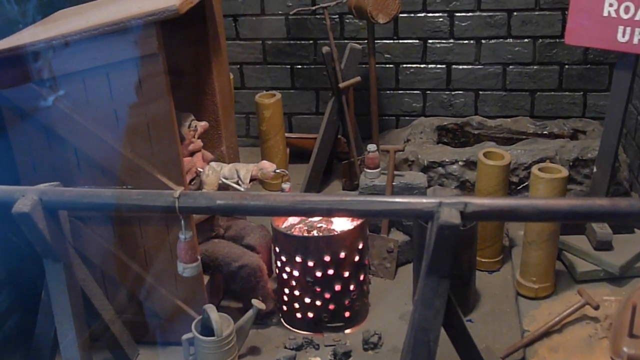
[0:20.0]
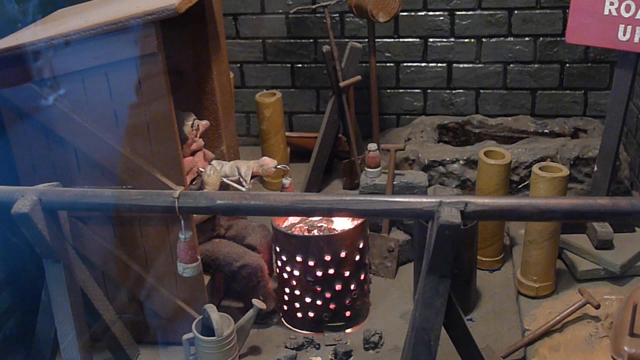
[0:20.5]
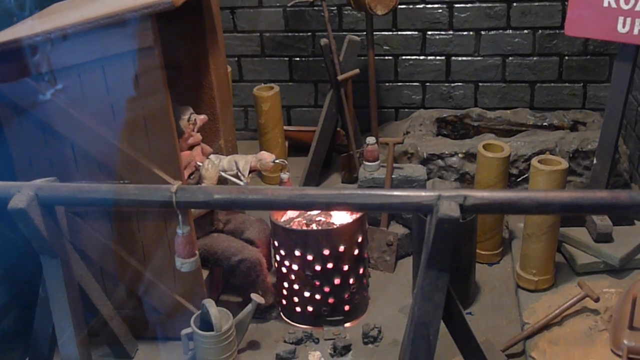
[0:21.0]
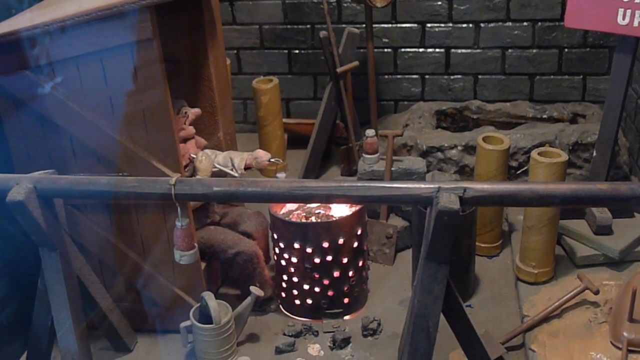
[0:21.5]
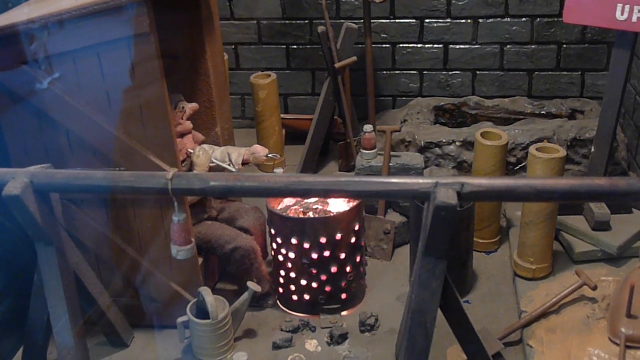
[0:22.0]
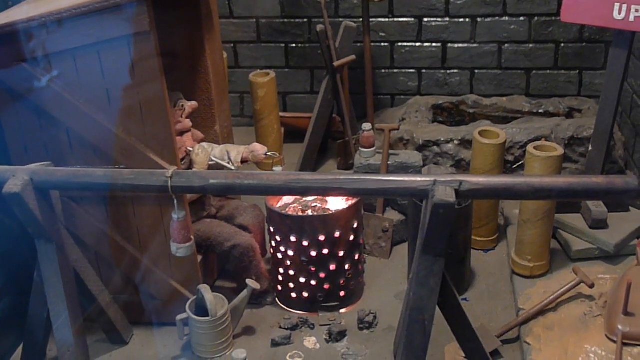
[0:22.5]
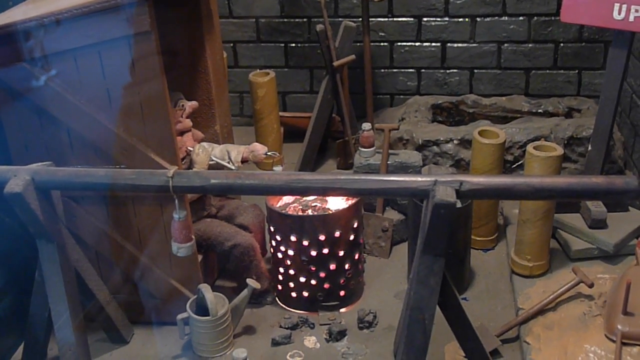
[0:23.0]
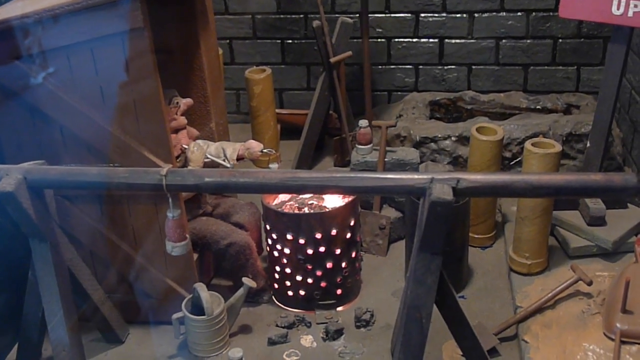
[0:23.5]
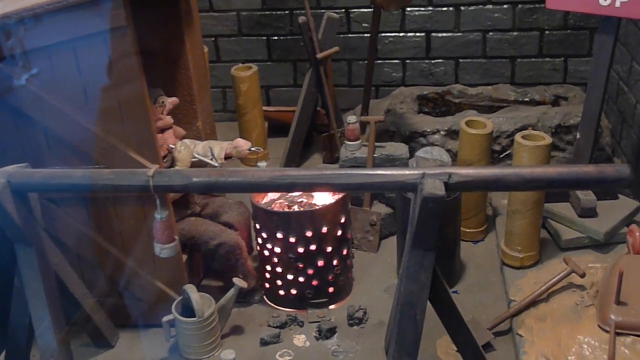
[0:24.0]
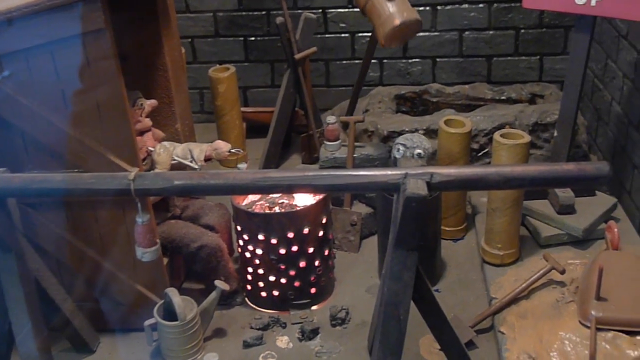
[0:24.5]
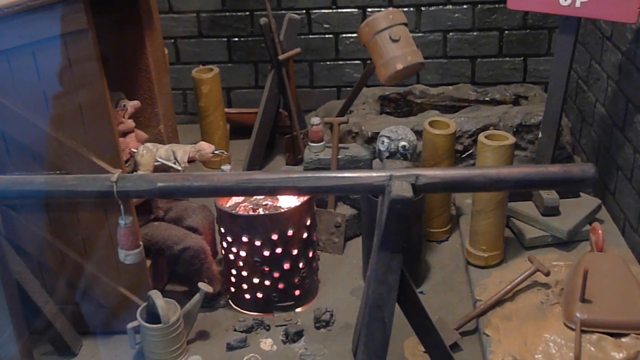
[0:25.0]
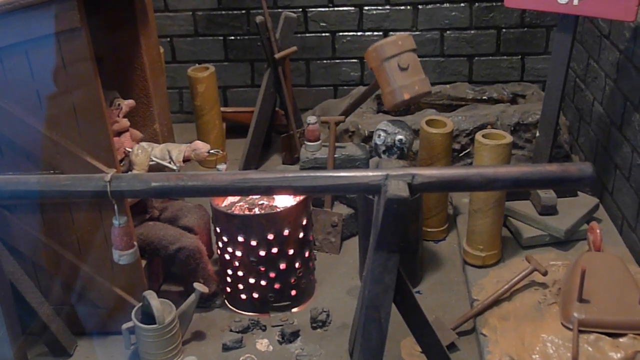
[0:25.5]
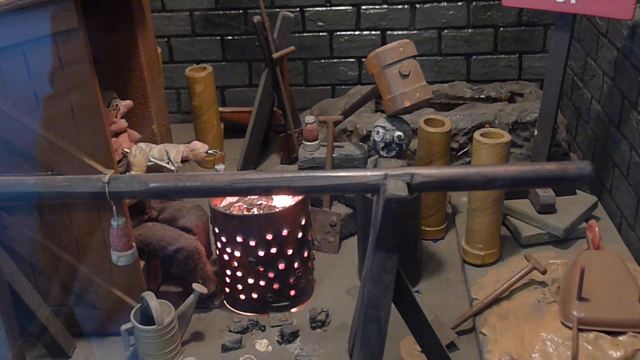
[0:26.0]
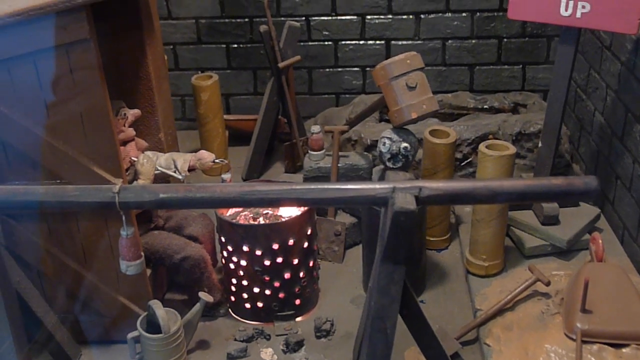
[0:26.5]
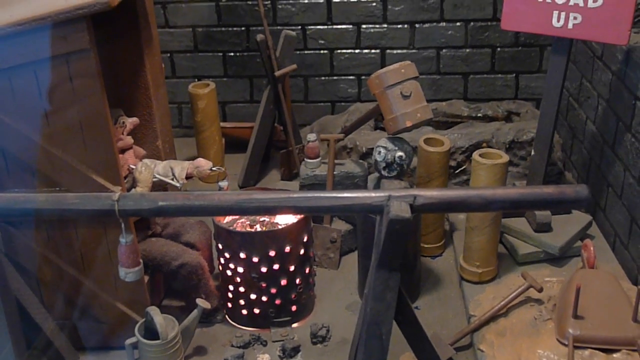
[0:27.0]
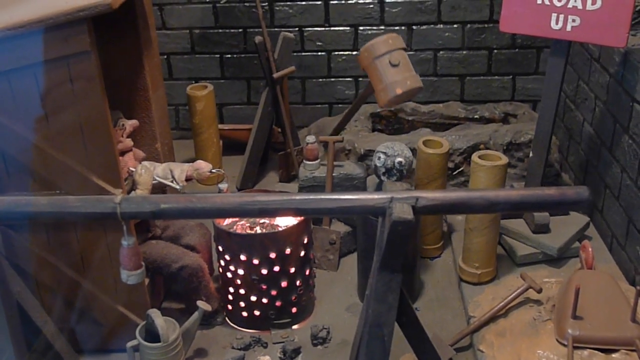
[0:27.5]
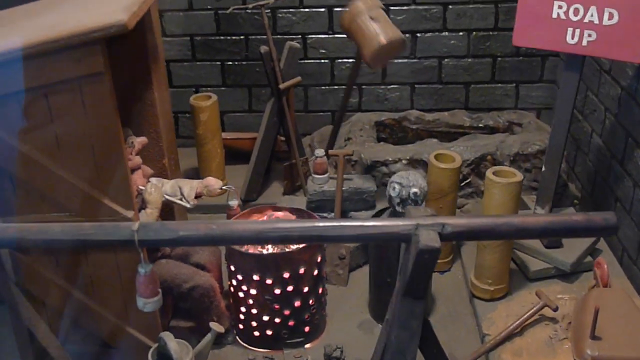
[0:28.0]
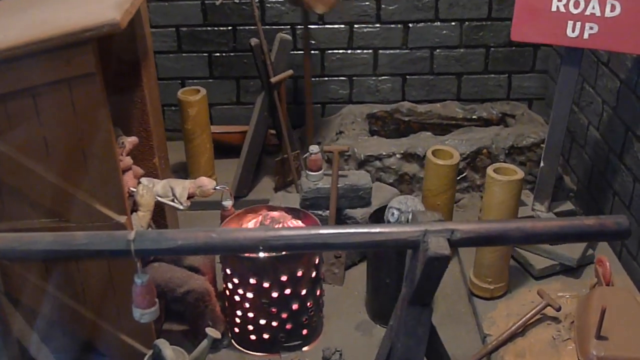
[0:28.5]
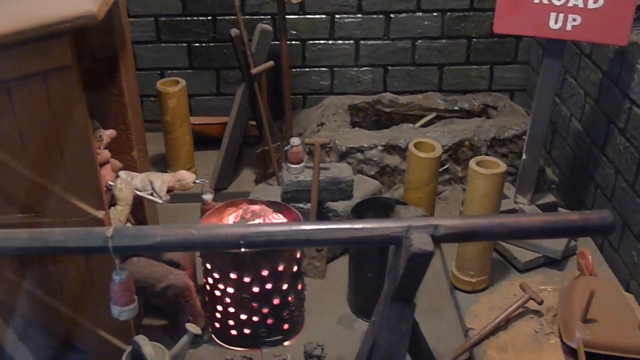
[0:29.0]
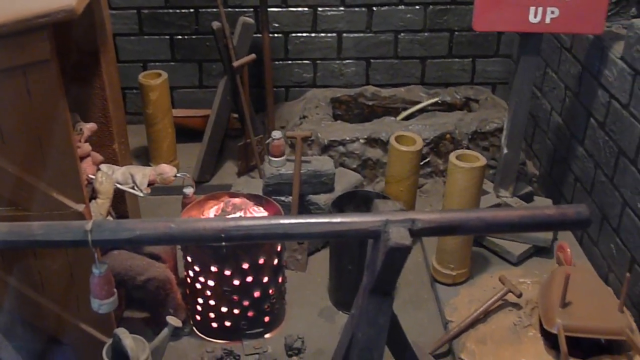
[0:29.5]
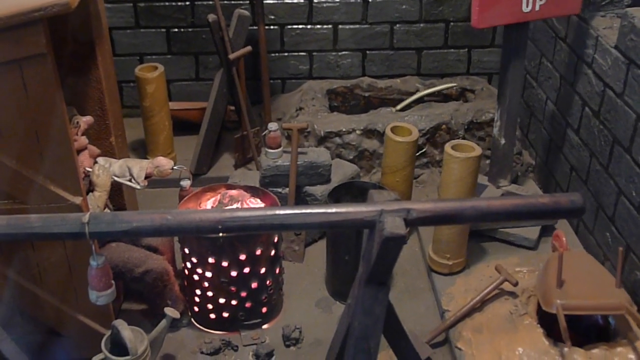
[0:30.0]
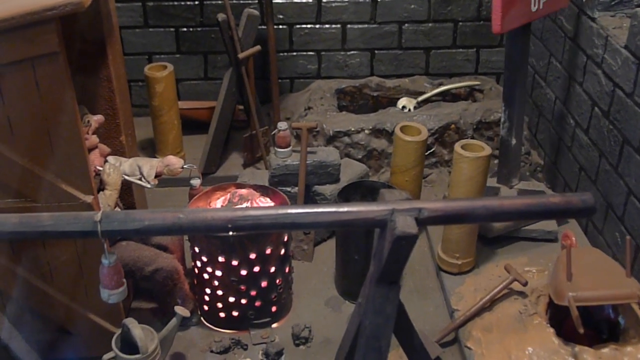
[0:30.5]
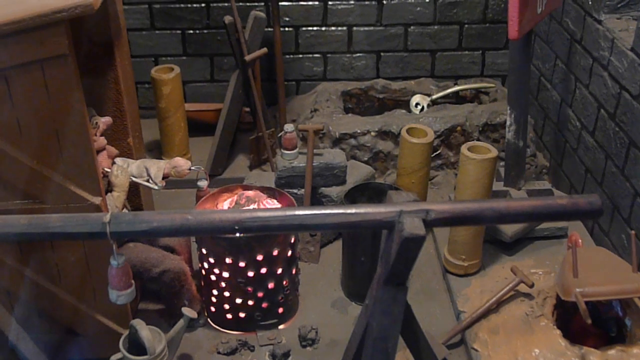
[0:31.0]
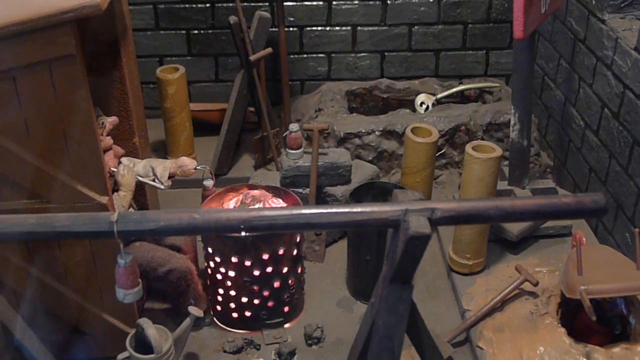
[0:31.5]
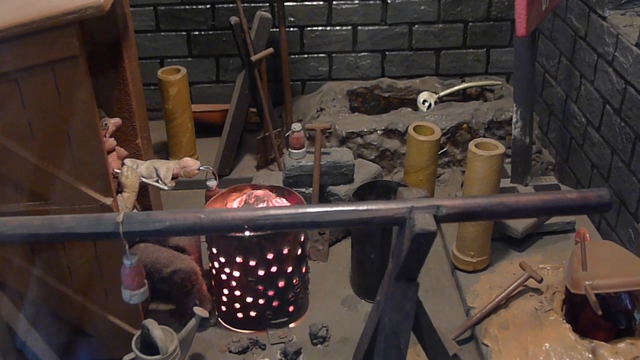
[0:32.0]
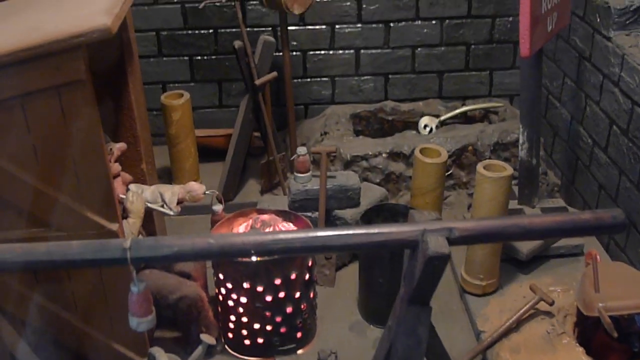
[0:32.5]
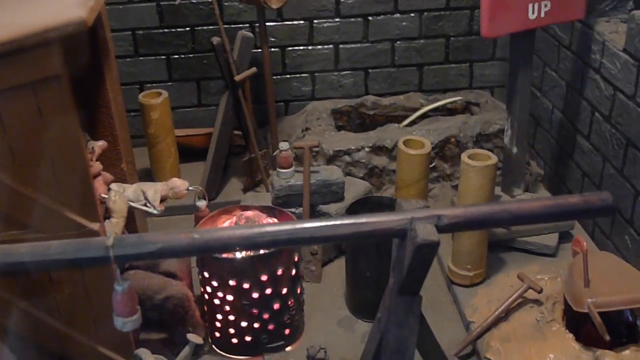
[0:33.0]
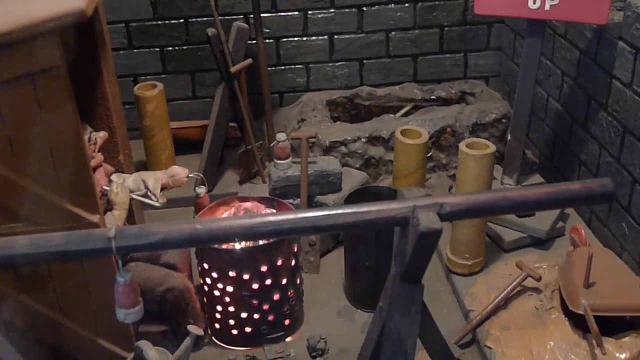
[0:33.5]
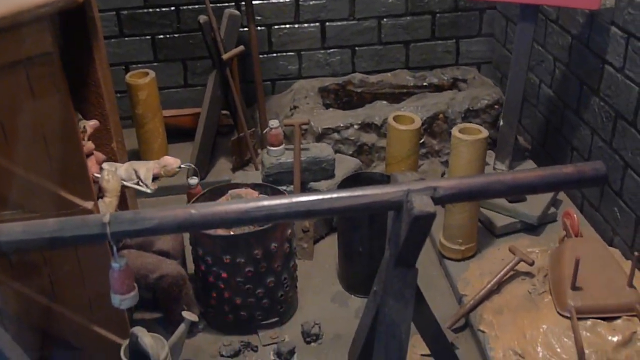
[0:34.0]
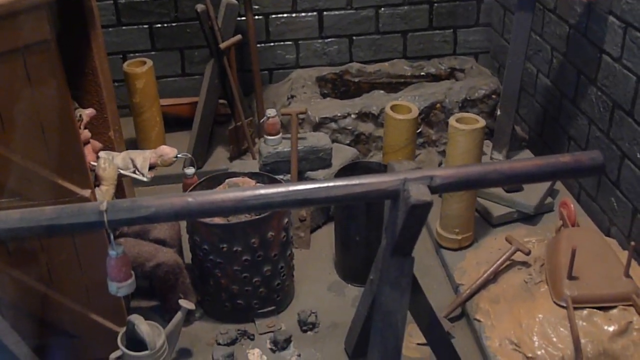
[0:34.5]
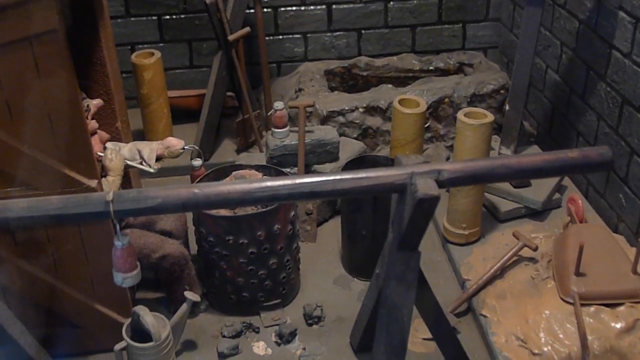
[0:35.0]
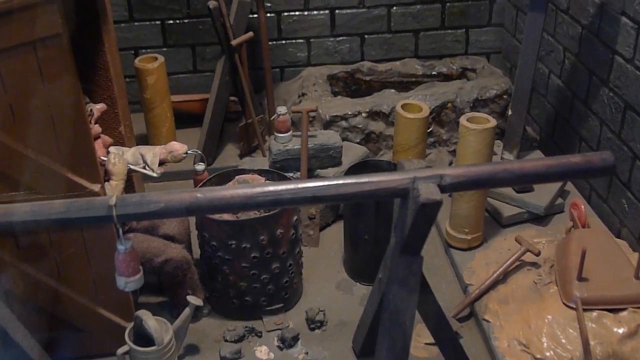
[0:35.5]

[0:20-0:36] More of the museum exhibit is shown, possibly a miner working inside an enclosure. There is a gray brick wall to the left, right and center. Action happens in the exhibit: a person in the wooden shack moves out of it a little toward the right, toward the metal circle with fire in it. Then a gray creature ascends out of a hole in the ground, a long-handled wooden mallet lowers to bonk the gray creature on its bald head, and the creature lowers back into the ground. The sign reading "danger road up" revolves a little and tilts toward the right. From another hole toward the back, something that is hard to make out, possibly part of a skeleton, also rises up. Yellow ochre tubes lie here and there, and there is a shovel and an assortment of various tools.